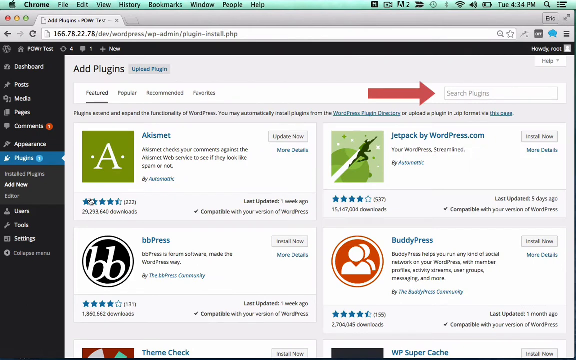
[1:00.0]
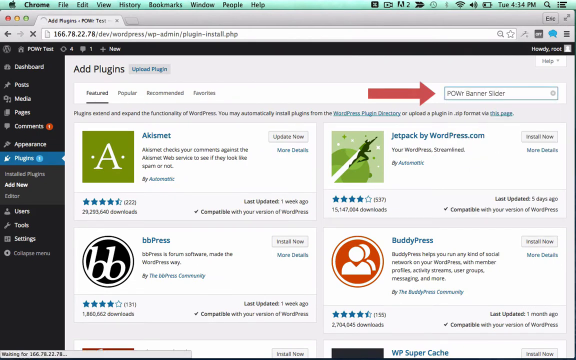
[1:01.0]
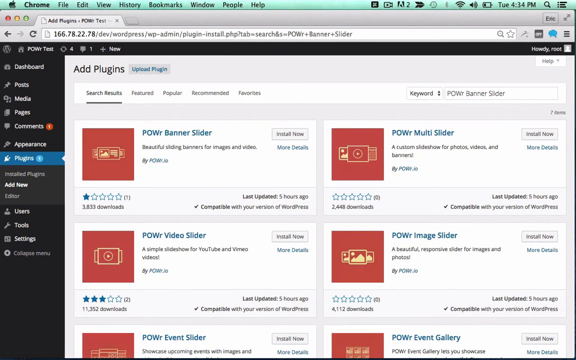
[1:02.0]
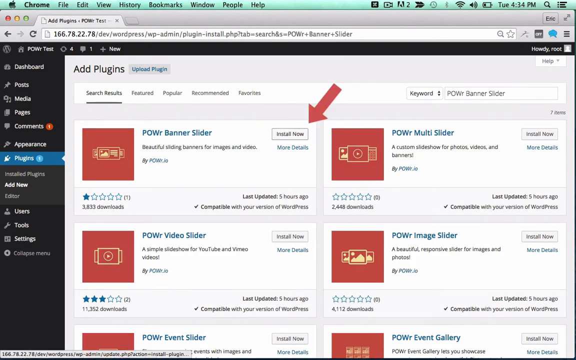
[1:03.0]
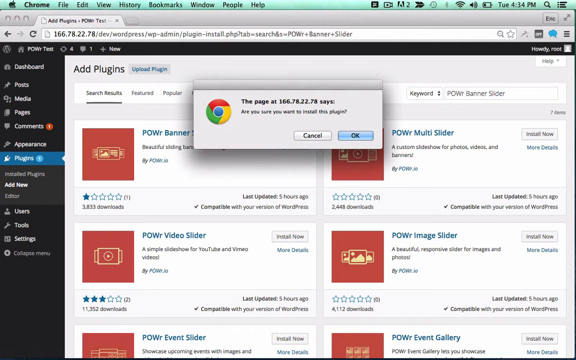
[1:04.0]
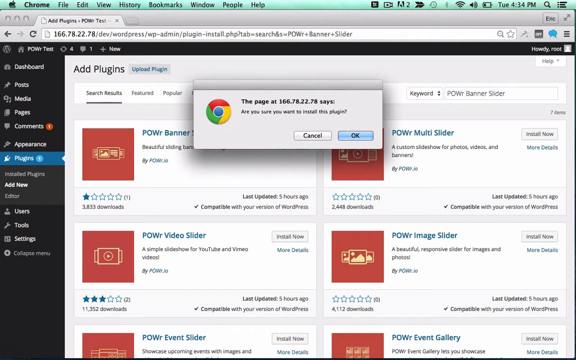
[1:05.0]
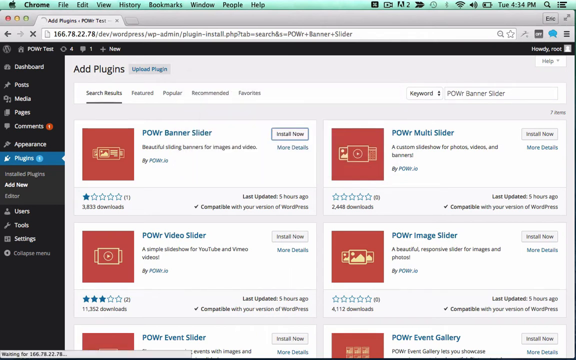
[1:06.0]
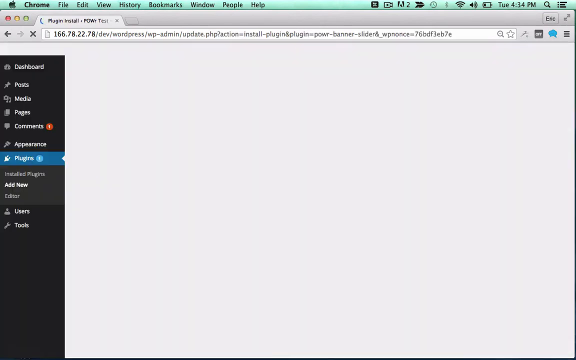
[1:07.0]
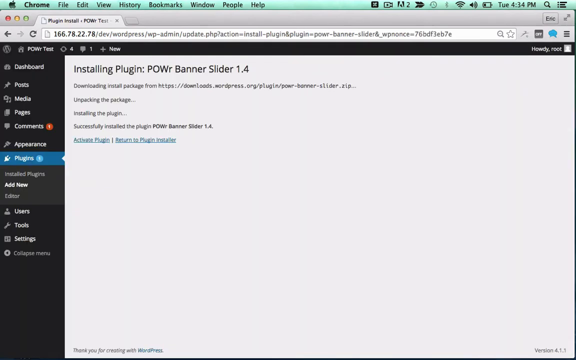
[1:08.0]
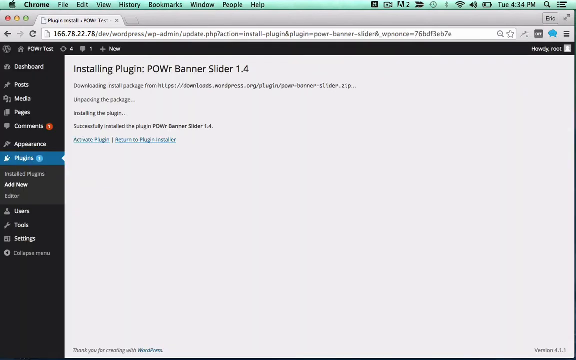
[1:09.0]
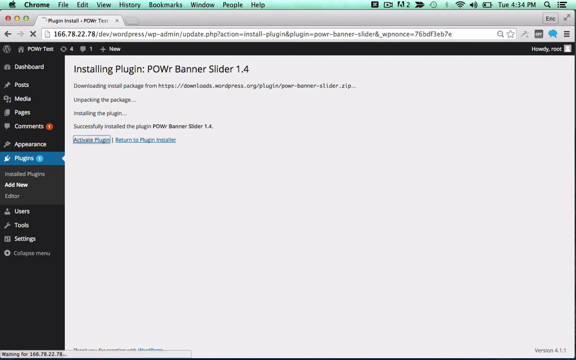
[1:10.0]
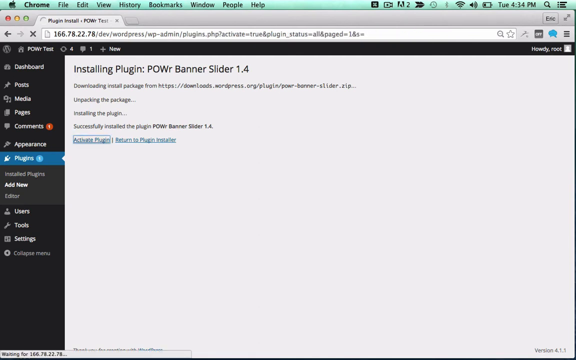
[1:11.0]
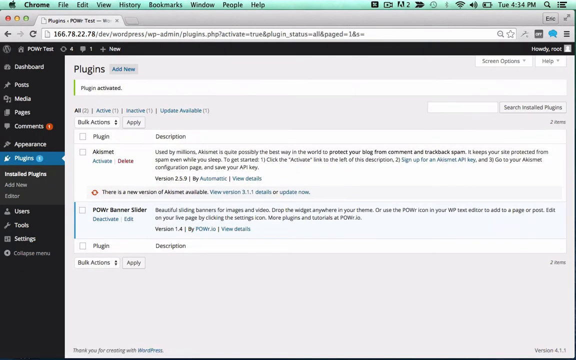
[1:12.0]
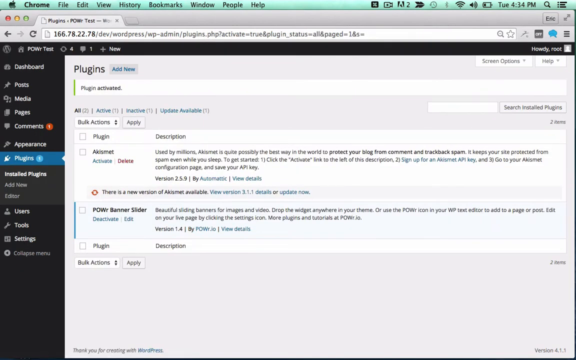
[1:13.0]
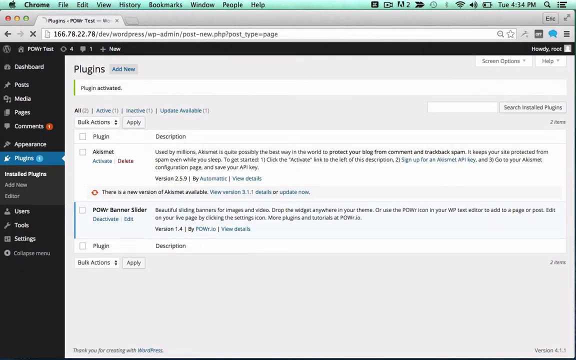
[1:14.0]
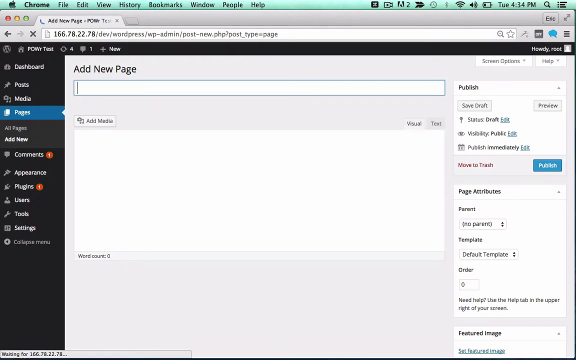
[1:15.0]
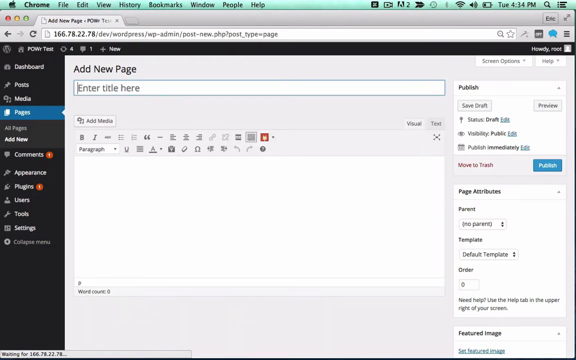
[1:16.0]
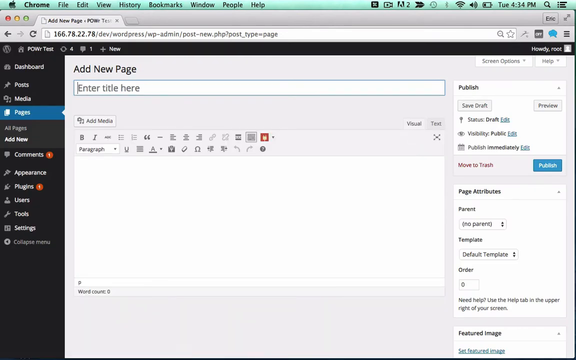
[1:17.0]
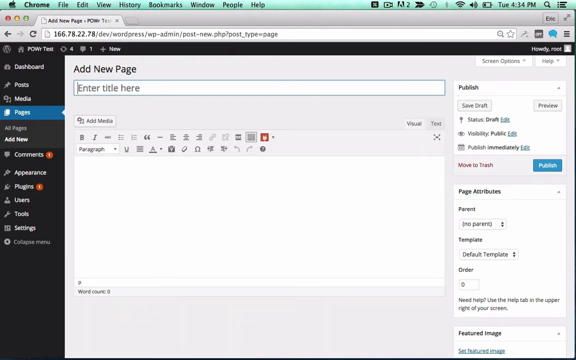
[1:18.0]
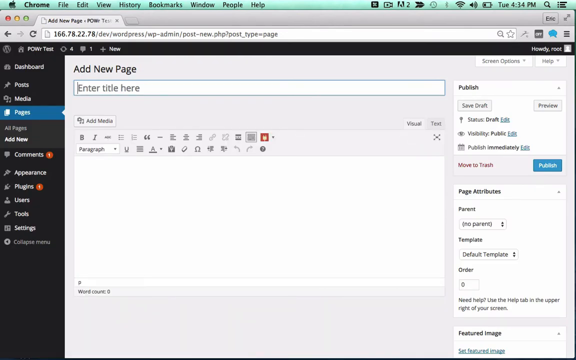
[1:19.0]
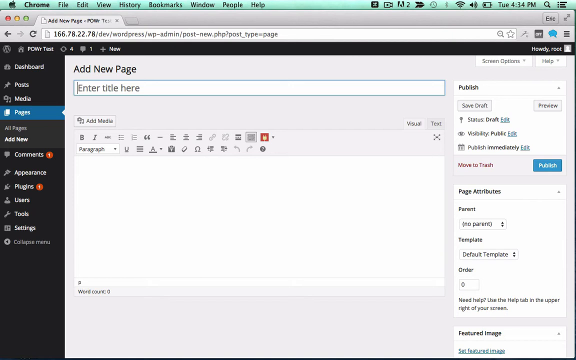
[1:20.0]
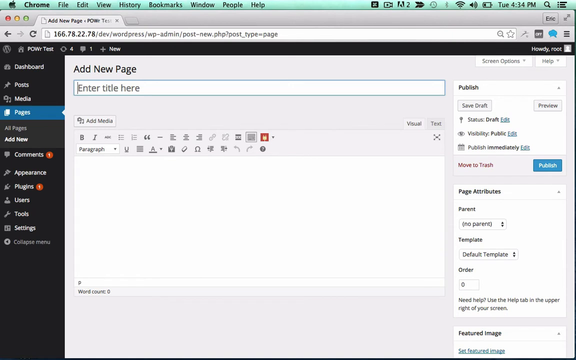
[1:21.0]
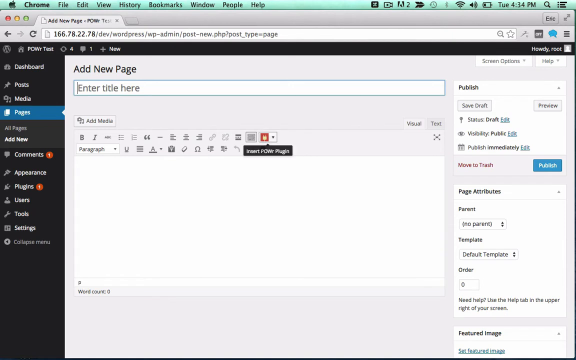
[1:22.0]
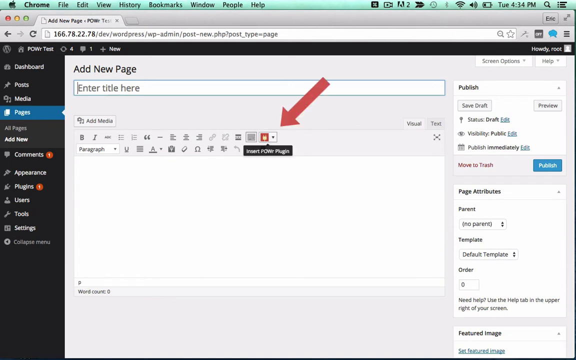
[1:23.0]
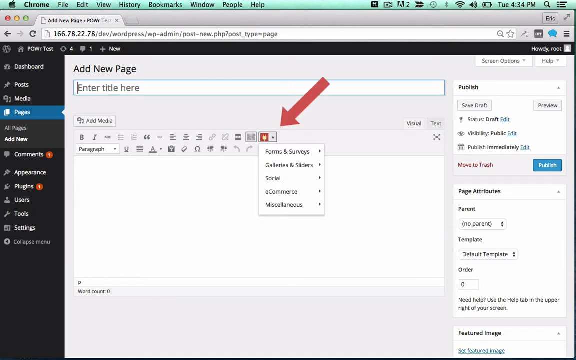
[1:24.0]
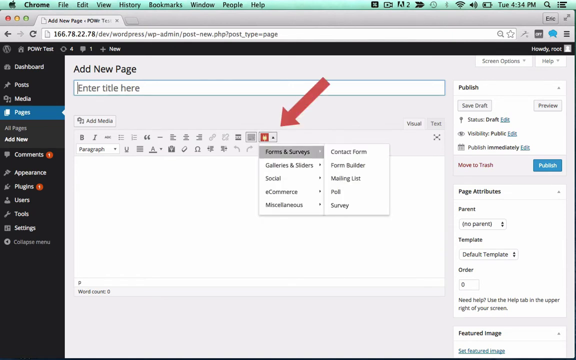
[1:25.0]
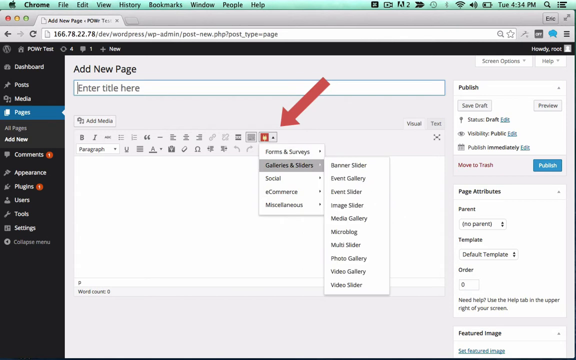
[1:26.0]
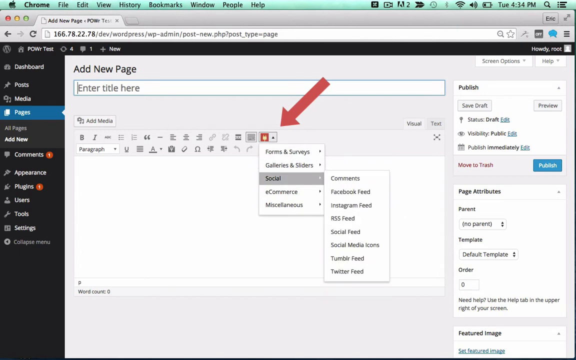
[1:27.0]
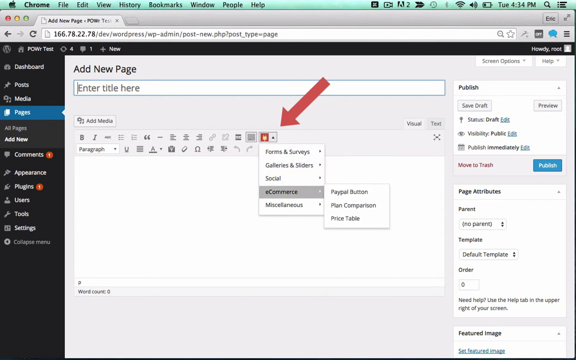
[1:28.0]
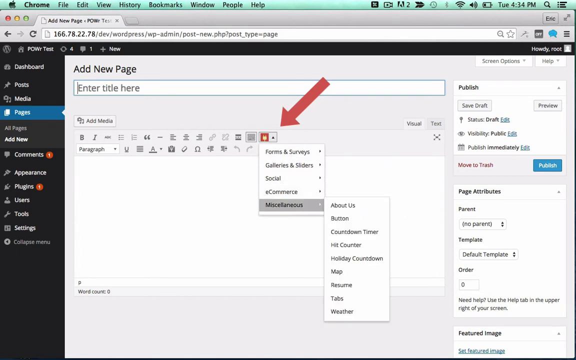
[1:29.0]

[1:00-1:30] A website is in the background, with a red arrow pointing to a section that says "search plugins". Other areas can be clicked; in the upper left-hand corner it says "add plugins" and "upload plugin", and four emblems on the page show options to choose from. "power banner slider" is typed in, a box pops up, and okay is clicked. They then look at advanced items and type "add new page" while the cursor moves back and forth. An arrow pops up with options reading "forms and surveys galleries and sliders special e-commerce and miscellaneous", and the person making the video directs a click on galleries and sliders. That opens another page listing "banner slider event gallery event slider image slider media gallery micro blog", and the list keeps going down with other options.